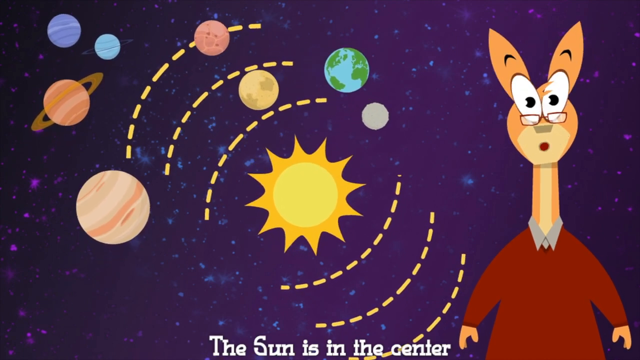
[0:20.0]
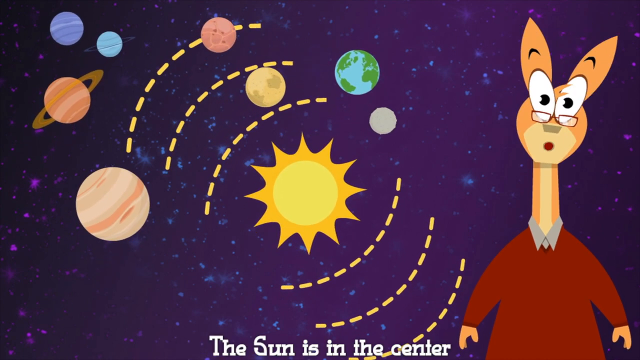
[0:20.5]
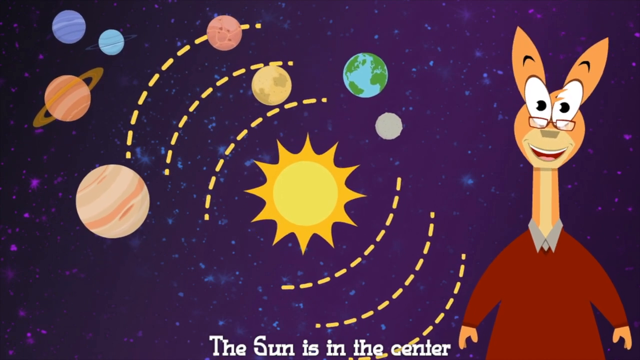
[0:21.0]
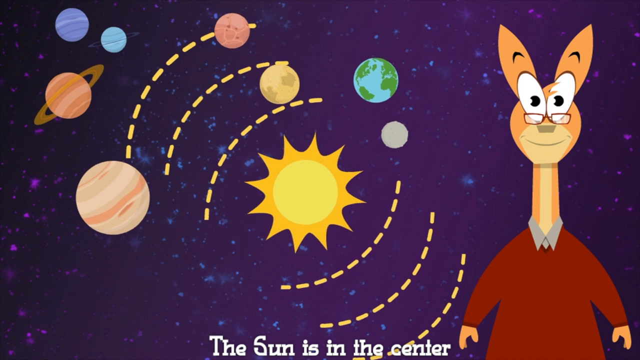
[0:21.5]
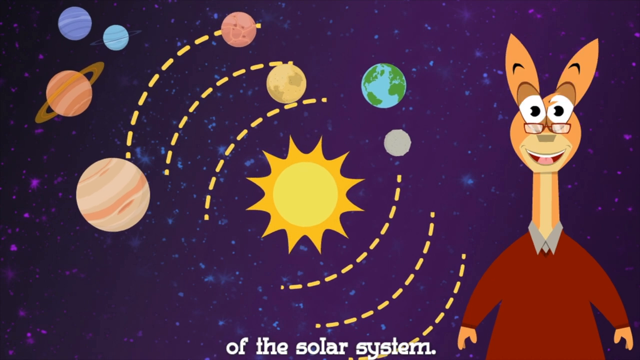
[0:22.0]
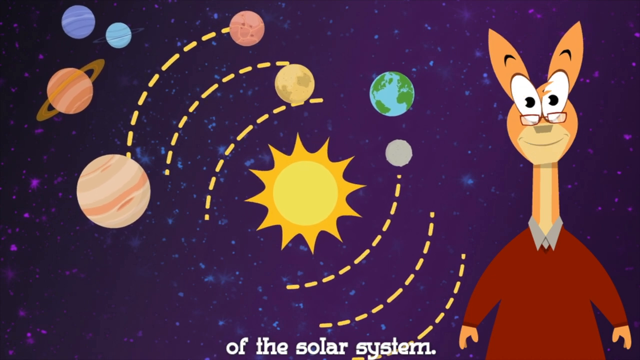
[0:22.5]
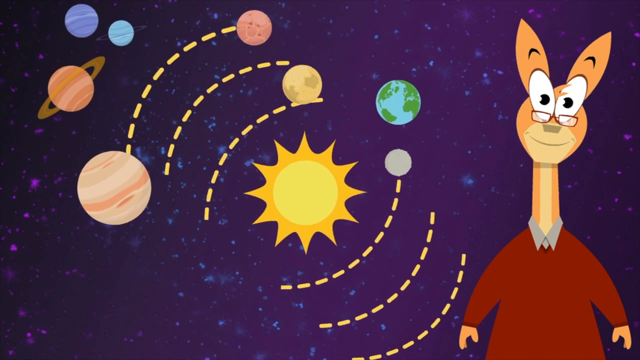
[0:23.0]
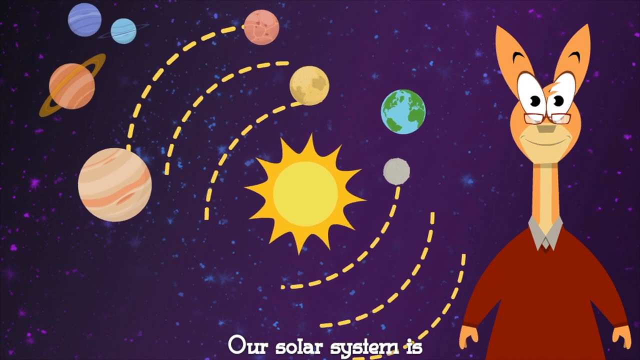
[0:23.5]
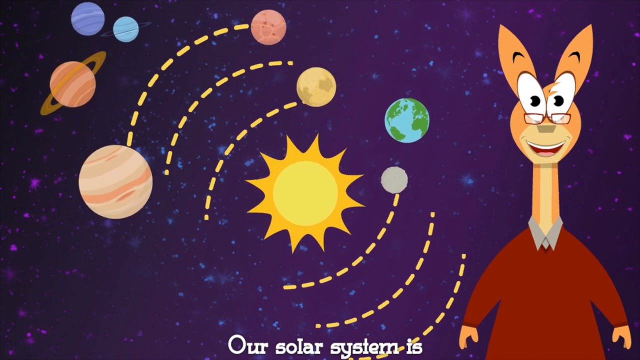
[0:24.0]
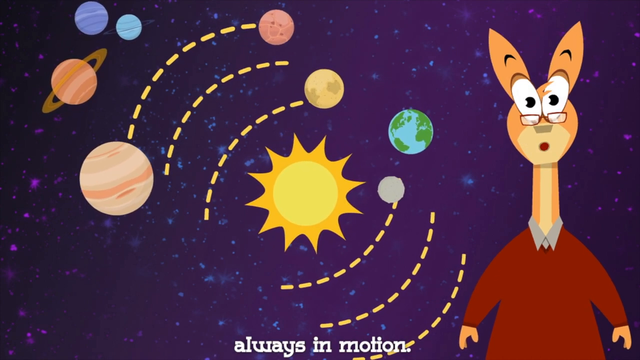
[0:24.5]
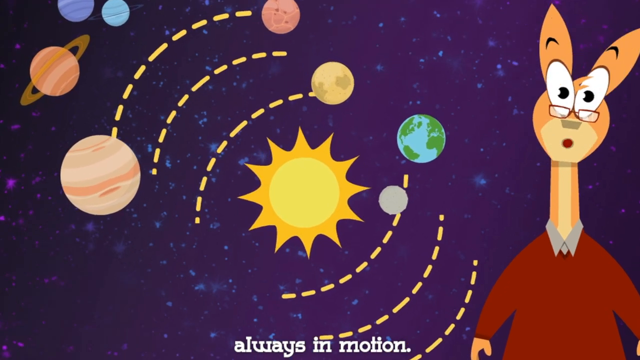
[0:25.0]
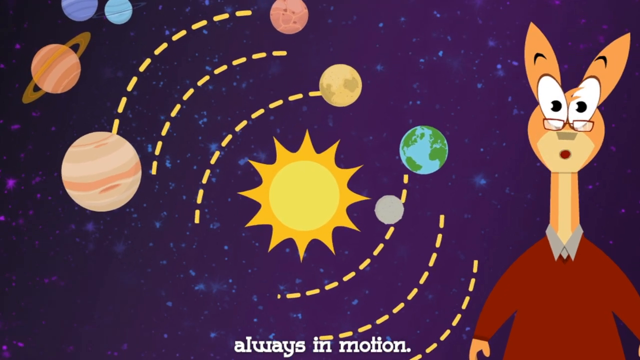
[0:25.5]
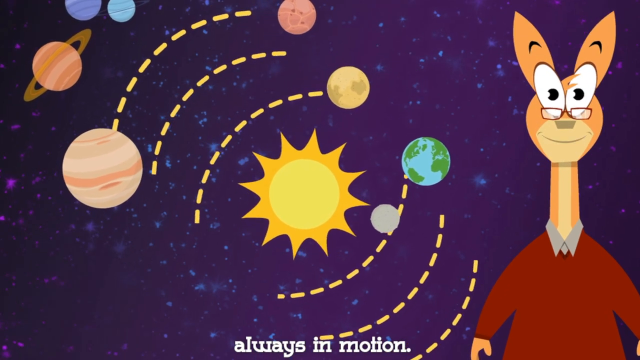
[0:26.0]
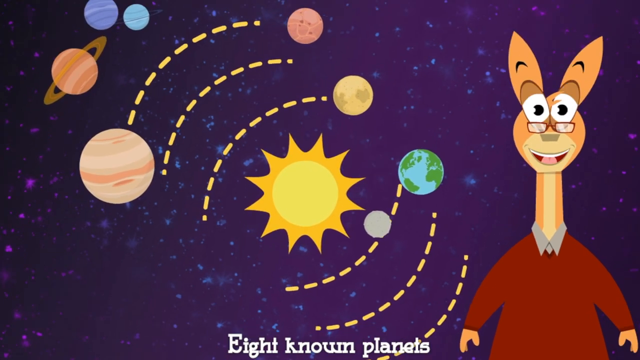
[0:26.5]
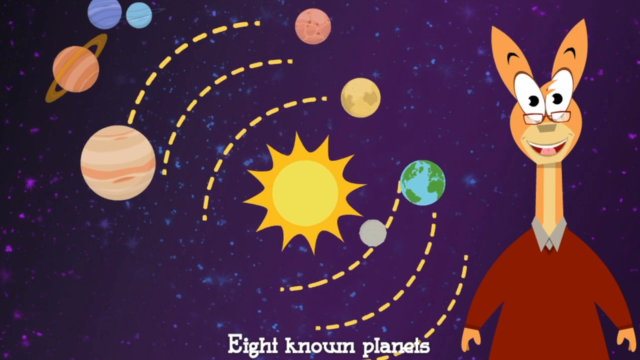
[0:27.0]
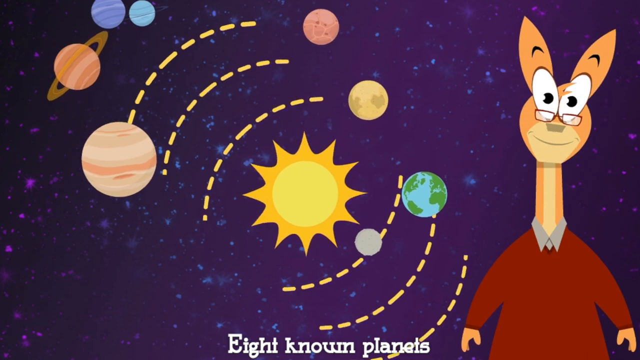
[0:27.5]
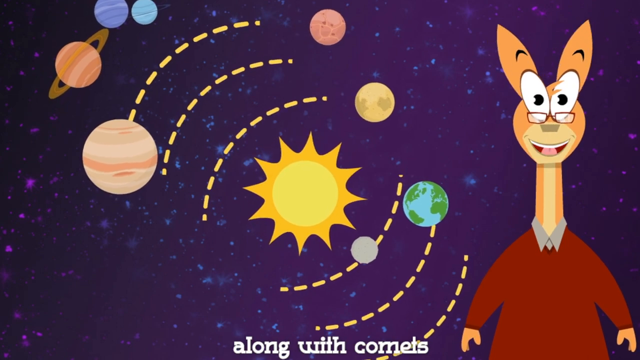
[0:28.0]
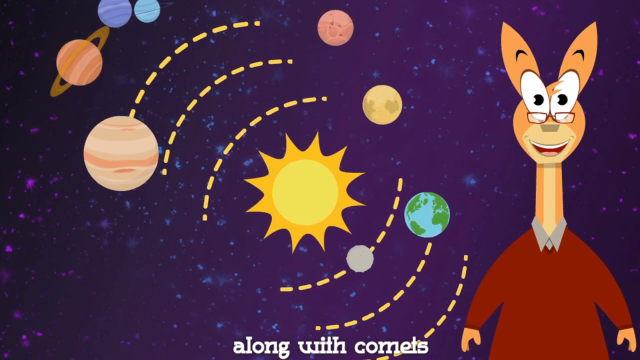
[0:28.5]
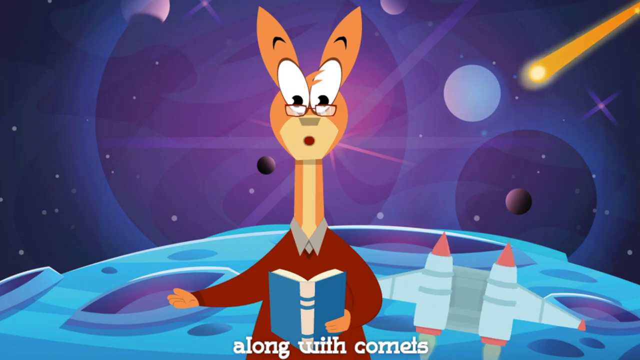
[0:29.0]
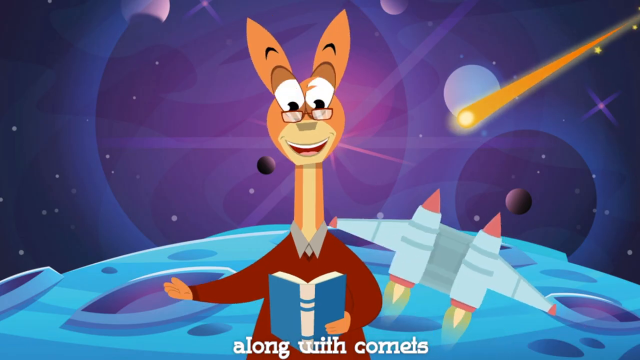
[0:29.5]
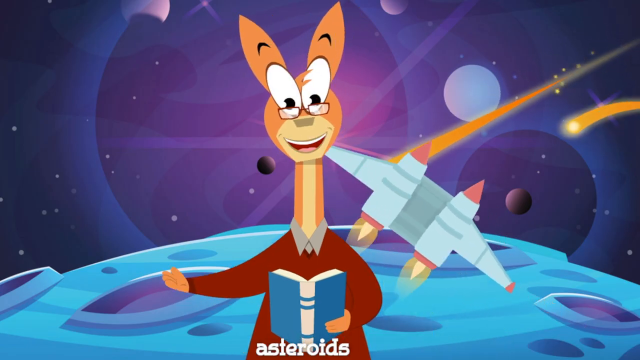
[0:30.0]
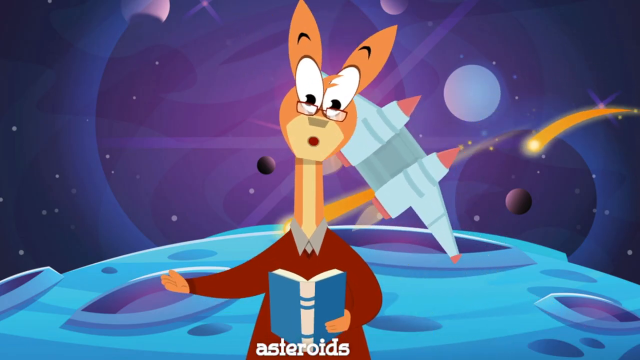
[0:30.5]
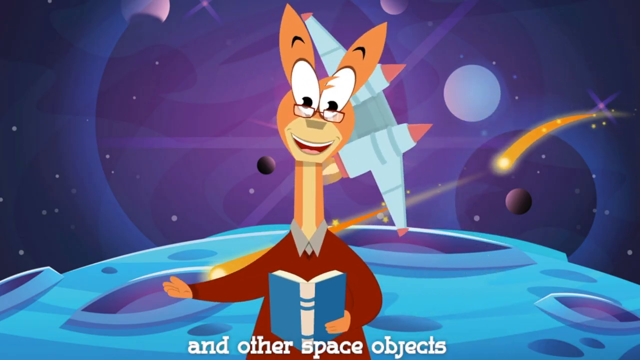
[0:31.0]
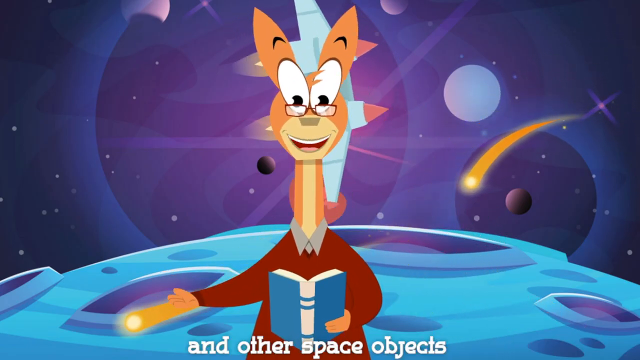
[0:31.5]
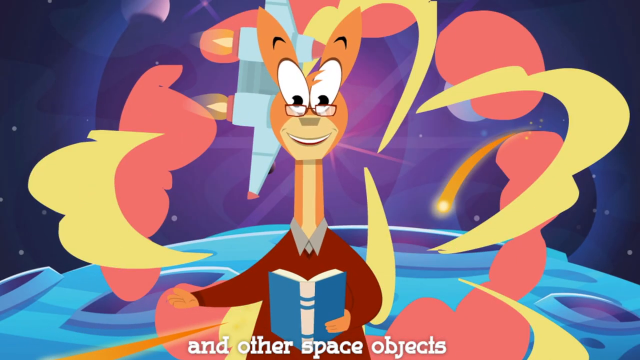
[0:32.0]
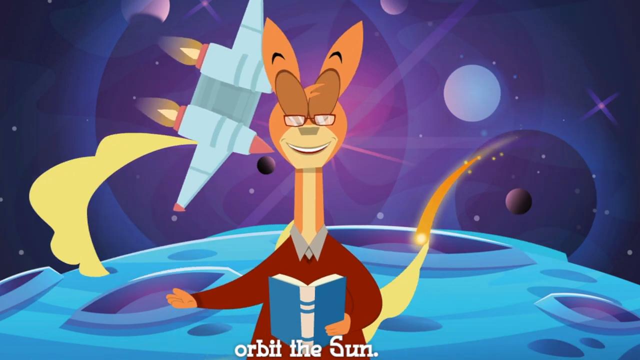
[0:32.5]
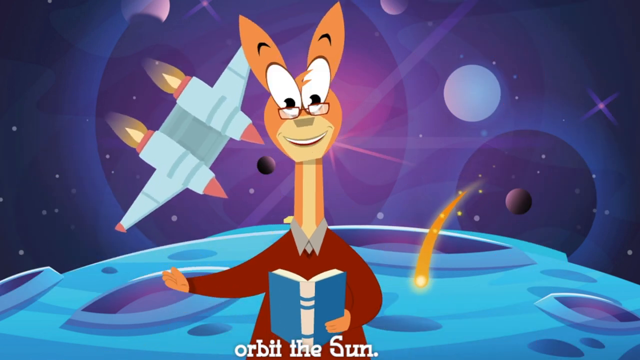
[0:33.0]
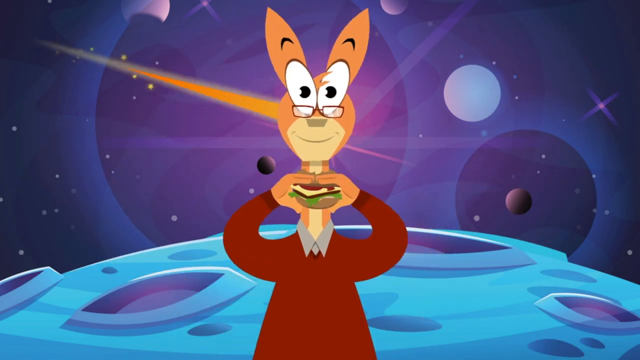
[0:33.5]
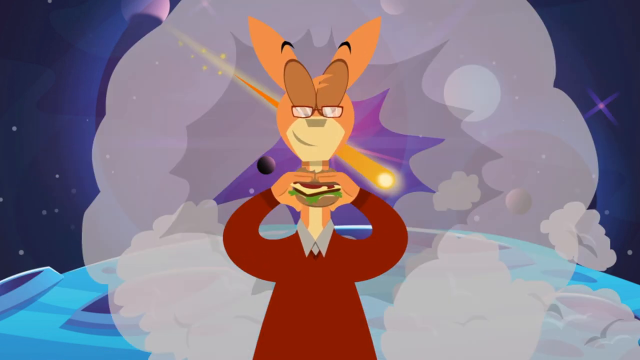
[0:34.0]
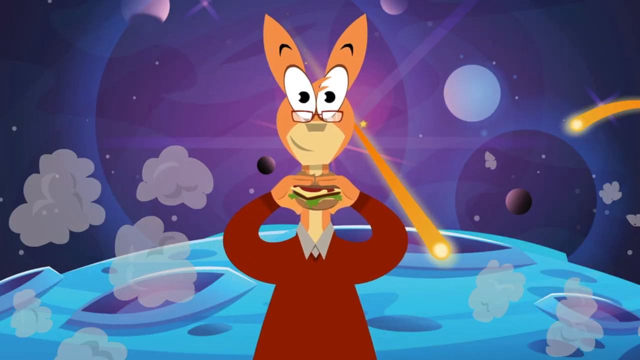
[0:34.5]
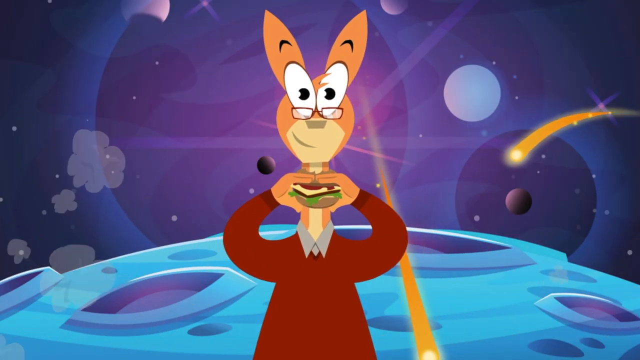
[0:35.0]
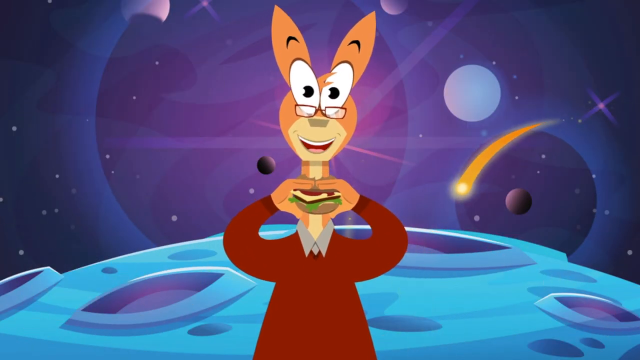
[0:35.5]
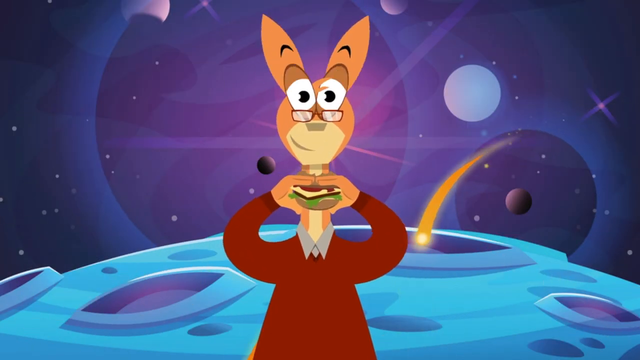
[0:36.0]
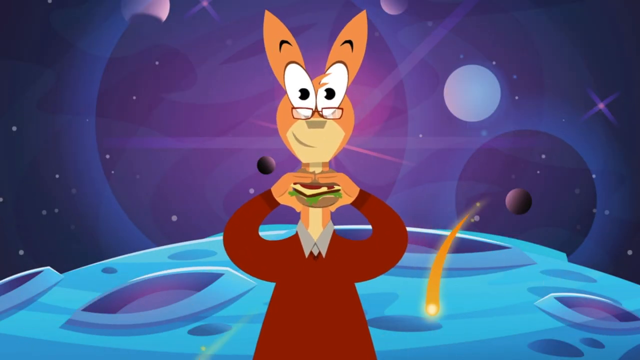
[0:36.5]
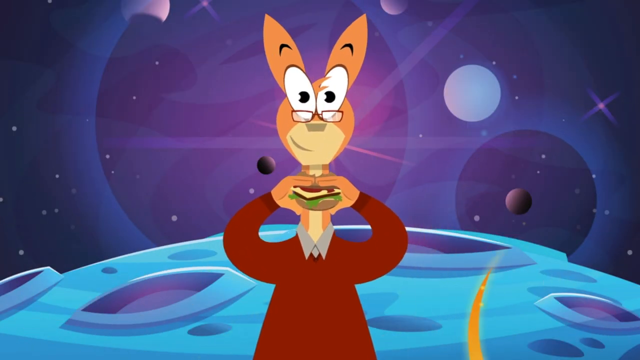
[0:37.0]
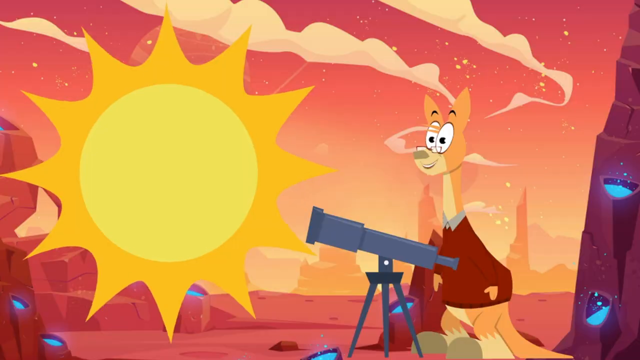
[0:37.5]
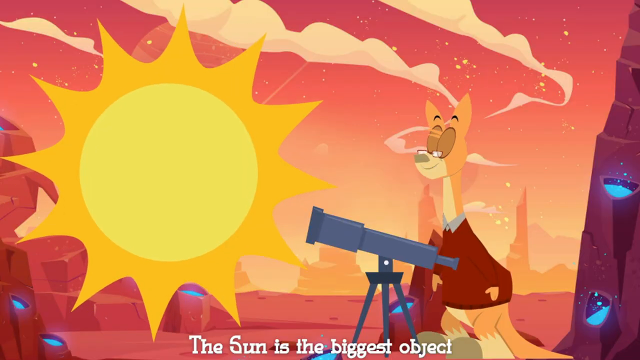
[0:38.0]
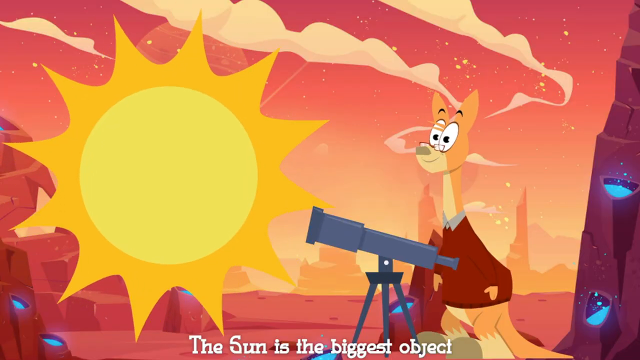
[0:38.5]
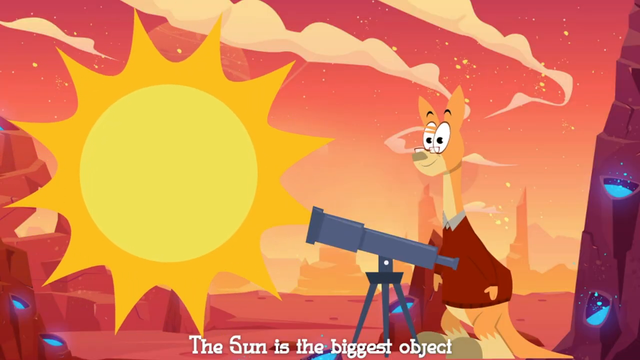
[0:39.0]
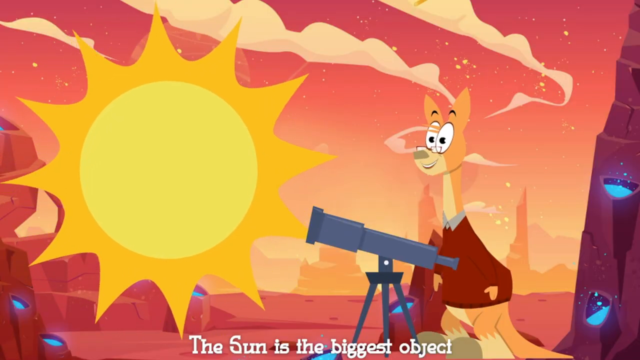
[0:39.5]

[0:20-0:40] An outer space background is blue, fading into black toward the left side of the screen. Numerous dots are scattered throughout the pink or purple map. Planets are rendered in the background, along with a Sun in the center that appears to radiate waves in all directions. On the right side of the screen is the deer, wearing a red shirt, a gray collar and small red glasses. He looks at the camera with big bulky eyes, and his eyebrows are visible within his ears. He leans his head to the right and begins smiling and talking, continuing to bob up and down and nod his head left and right while the planets orbit the Sun in the center of the background. The scene cuts to the deer in the middle of the screen, with a spaceship flying and rotating behind him. Stars and comets shoot toward the bottom of the screen. Behind him in the background is a cratered terrestrial planet, with several other planets far in the distance.